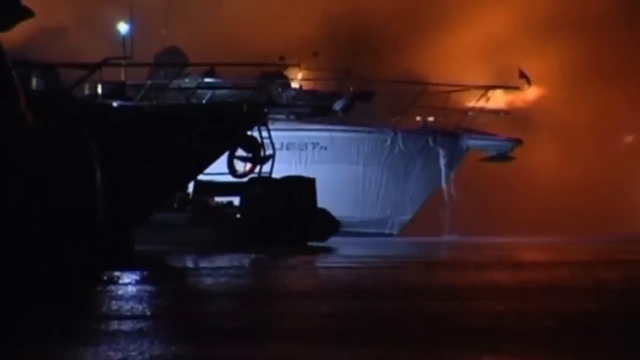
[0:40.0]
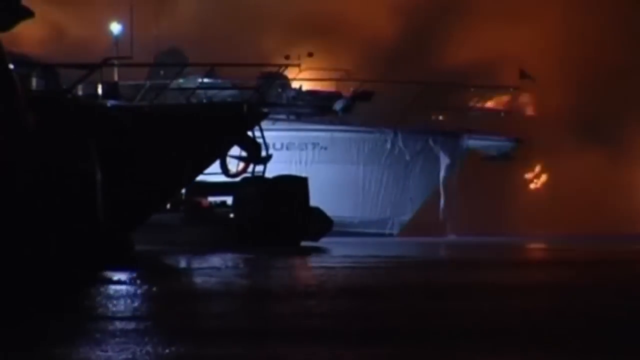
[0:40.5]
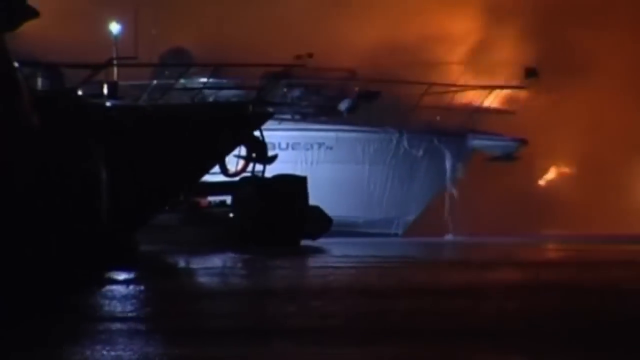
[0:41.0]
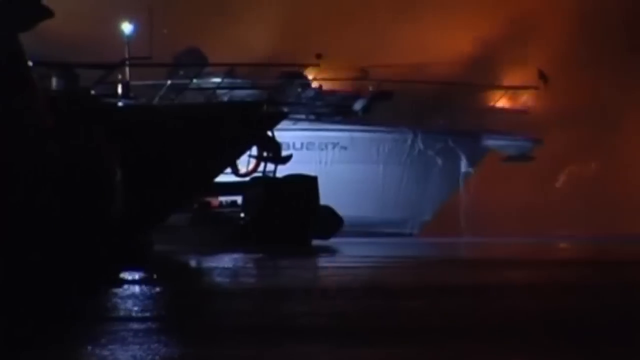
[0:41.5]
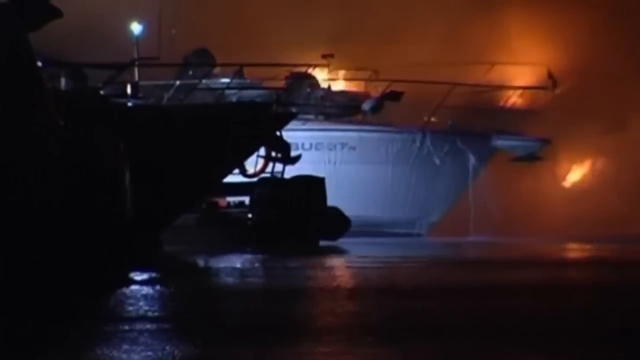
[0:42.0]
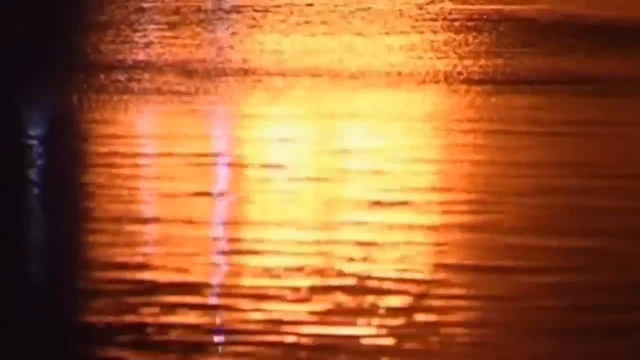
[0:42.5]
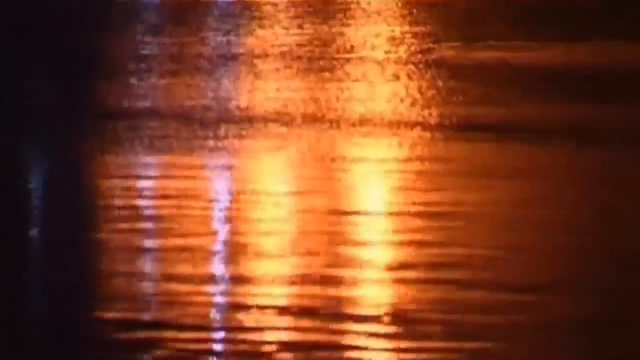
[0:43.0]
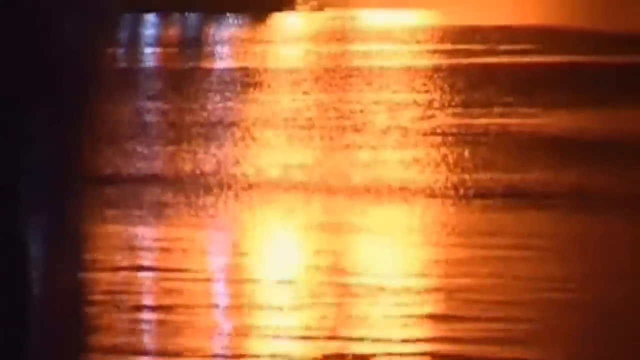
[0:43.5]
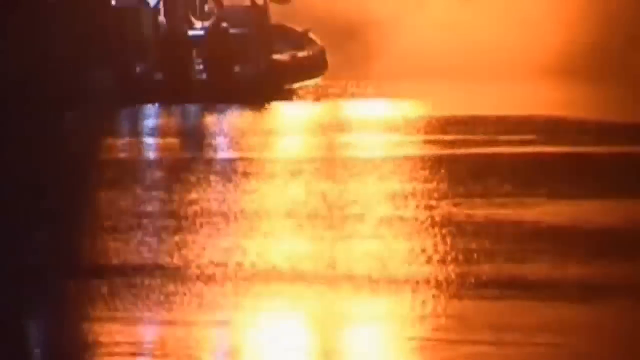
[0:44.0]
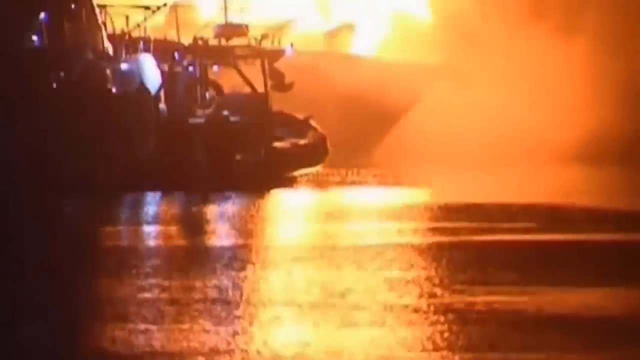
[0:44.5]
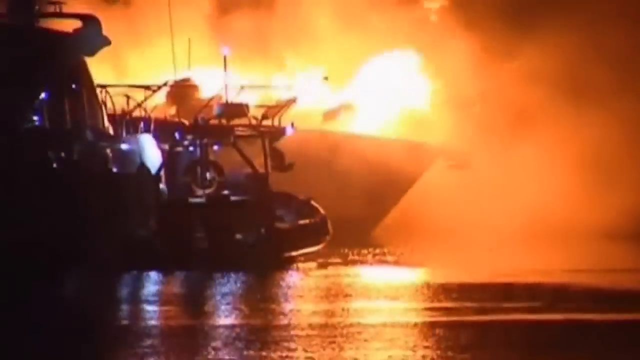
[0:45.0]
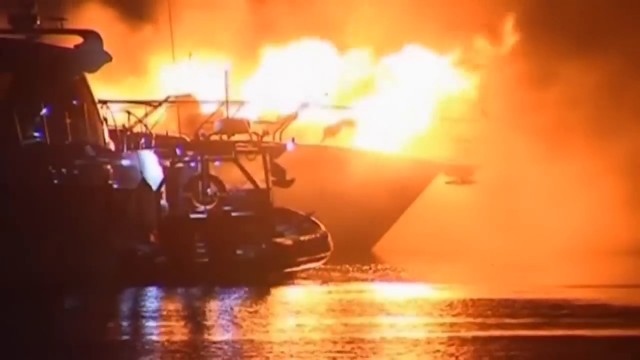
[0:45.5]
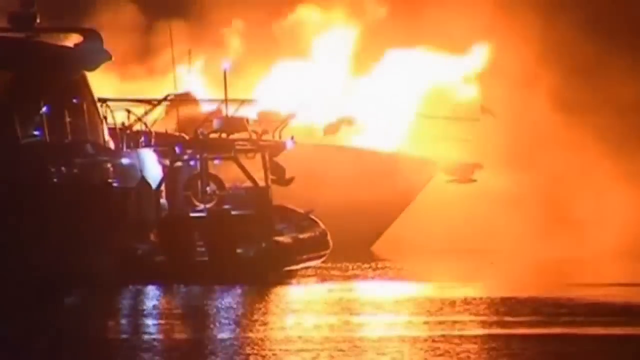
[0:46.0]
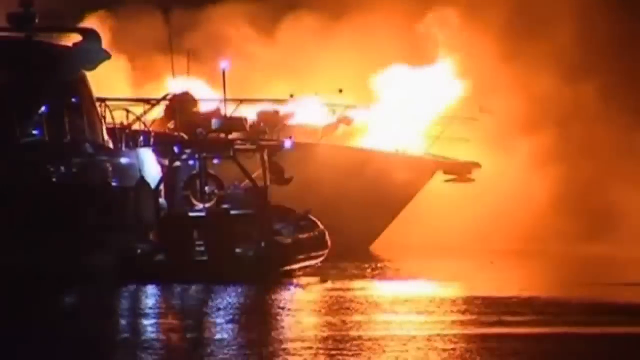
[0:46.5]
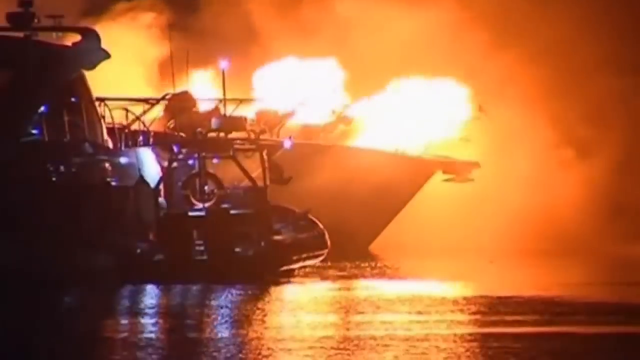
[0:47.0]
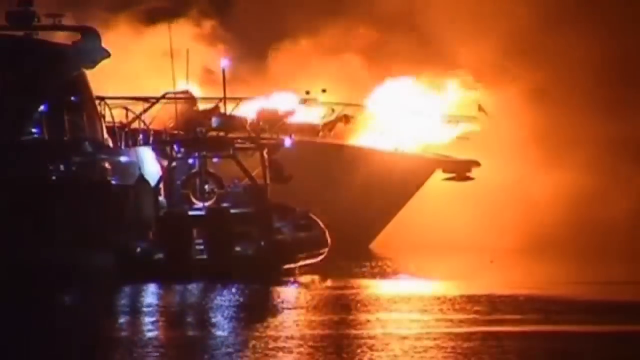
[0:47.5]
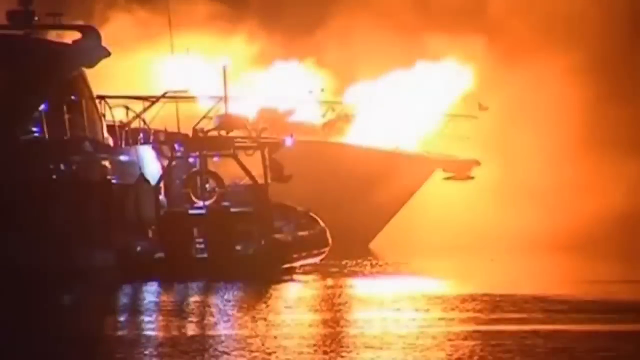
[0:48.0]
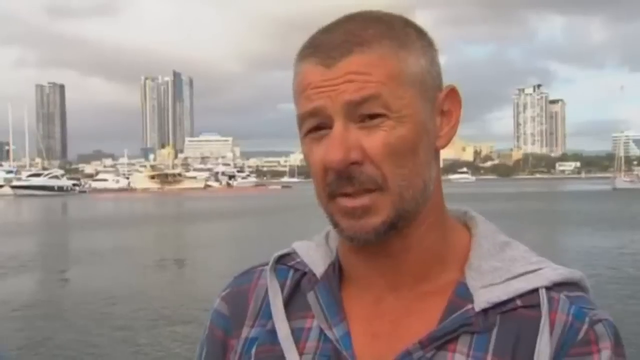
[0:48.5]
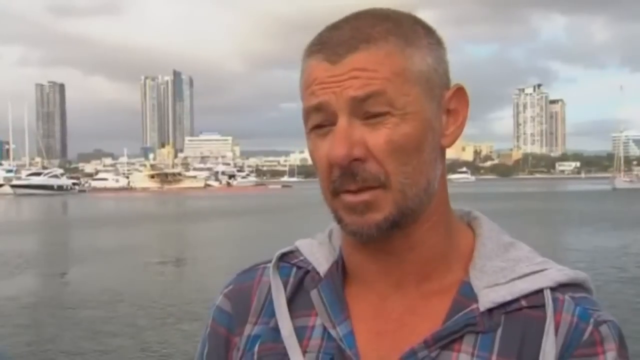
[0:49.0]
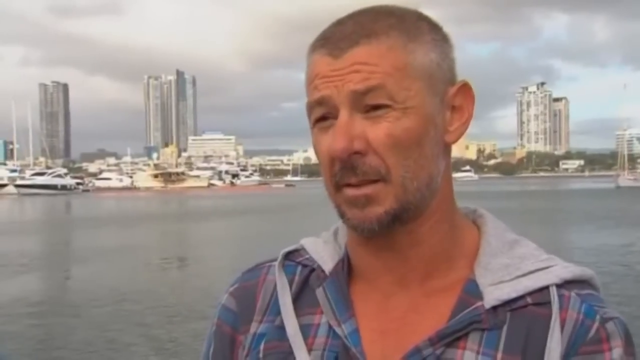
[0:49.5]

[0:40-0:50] A boat is on fire, with a body of water on the right side and a lot of orange clouds from the fire in the background; the flames are yellow and orange. The scene cuts to a body of water where the reflection of the fire is yellow and orange. The camera pans up to show the boat completely caught in flames from the top, the flames white, yellow and orange, with smoke moving from left to right. In the foreground there are two more boats in front of it, which look dark because the scene seems to be at night. The video then cuts to a man being interviewed. He wears a hoodie with a gray hood, and the rest of the sweater seems to be blue-gray. He has a gray beard and short gray hair. Behind him are a body of water, some skyscrapers, and a sky covered in gray clouds.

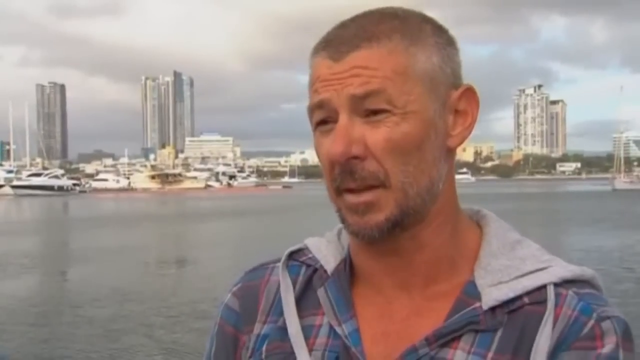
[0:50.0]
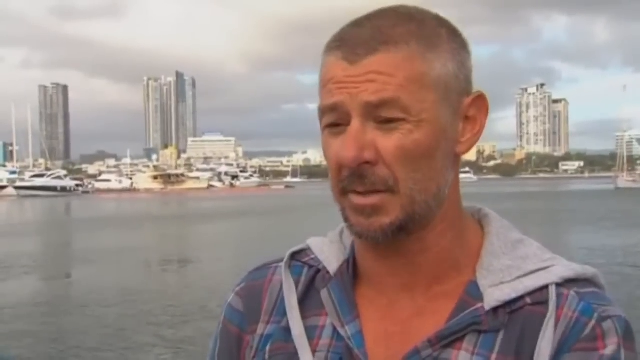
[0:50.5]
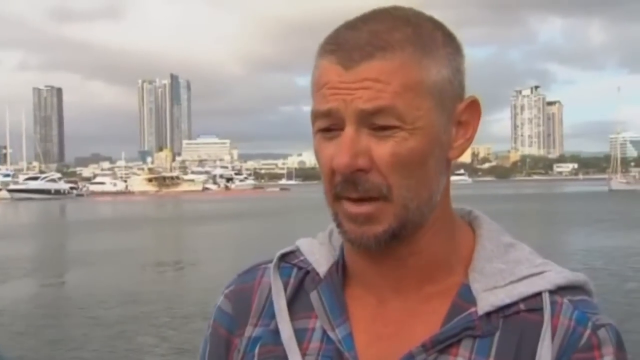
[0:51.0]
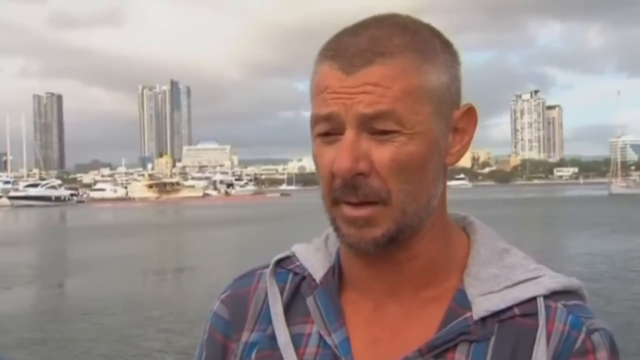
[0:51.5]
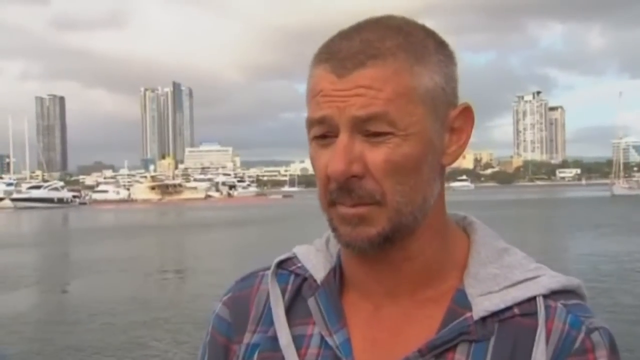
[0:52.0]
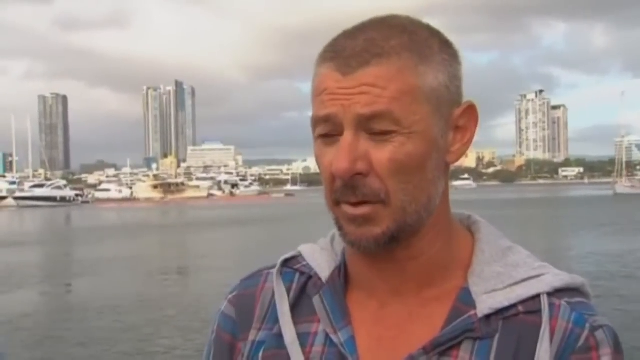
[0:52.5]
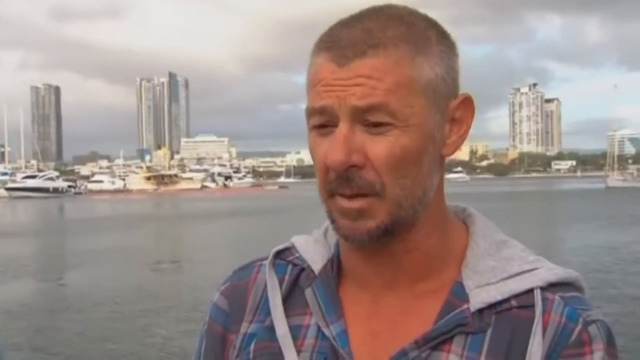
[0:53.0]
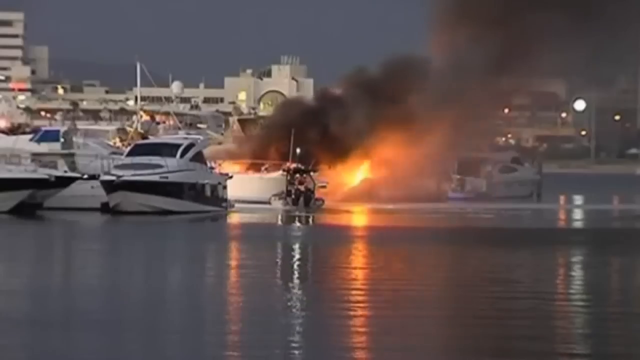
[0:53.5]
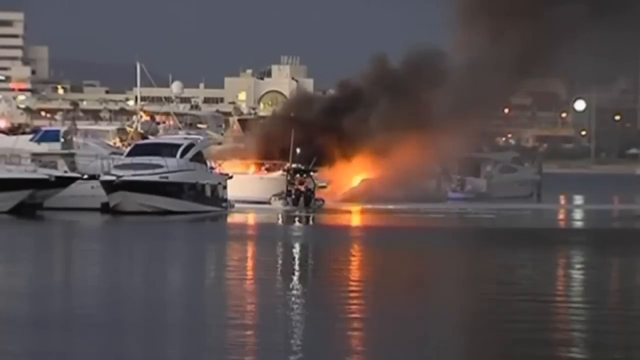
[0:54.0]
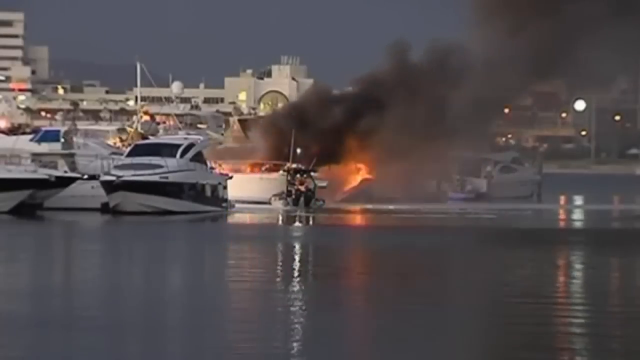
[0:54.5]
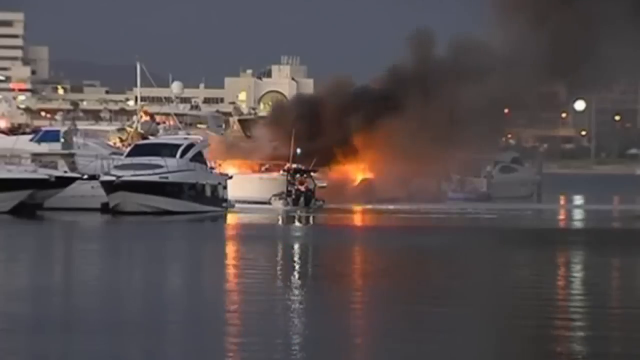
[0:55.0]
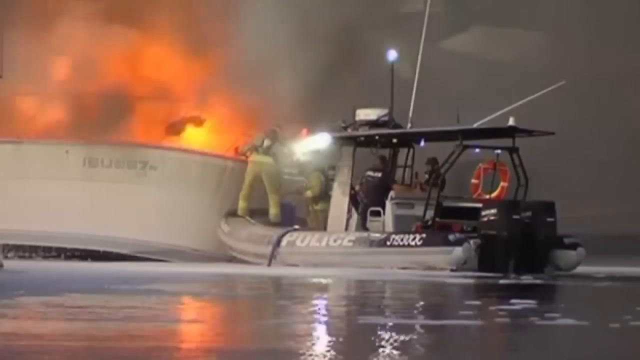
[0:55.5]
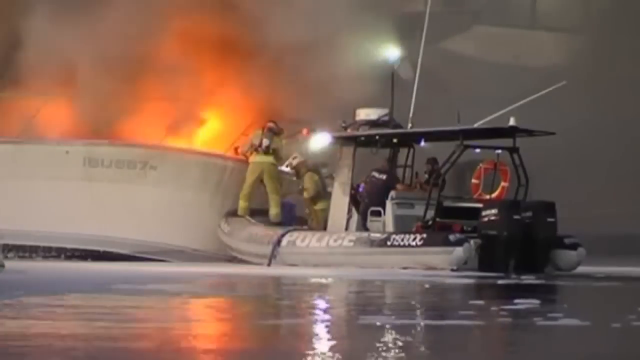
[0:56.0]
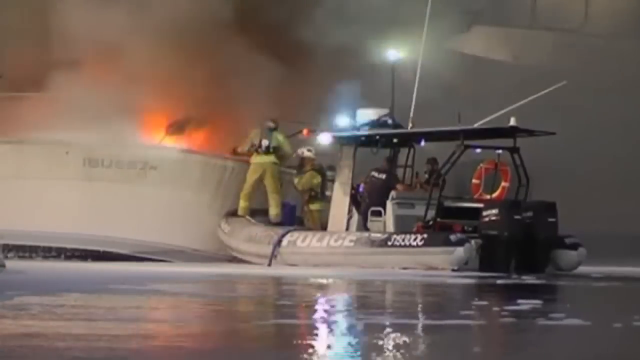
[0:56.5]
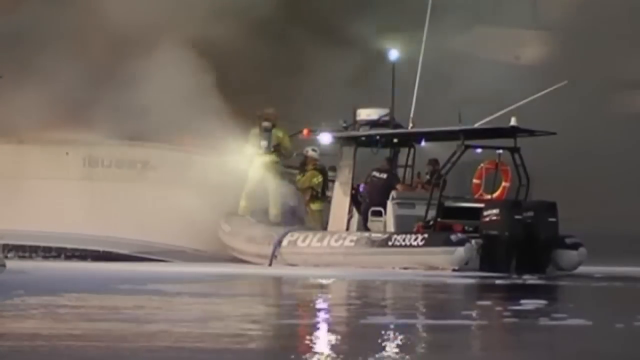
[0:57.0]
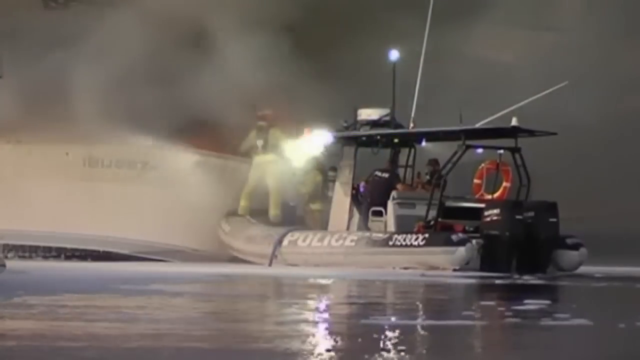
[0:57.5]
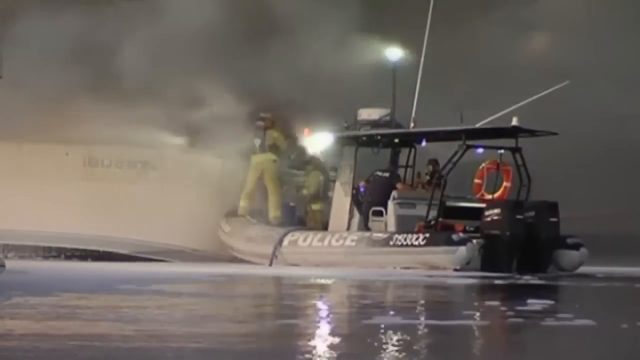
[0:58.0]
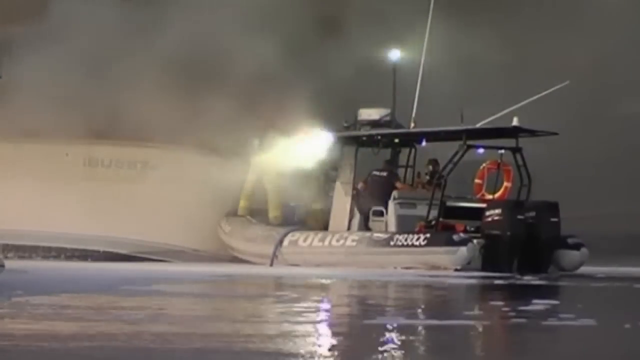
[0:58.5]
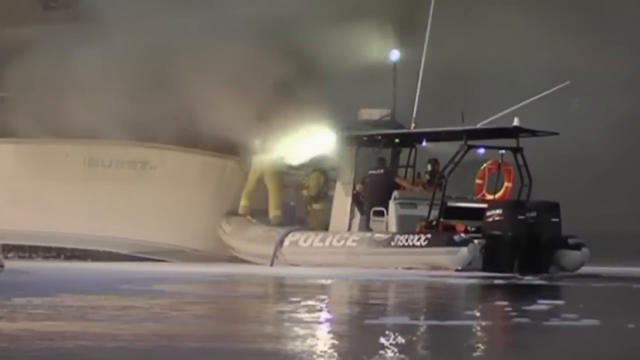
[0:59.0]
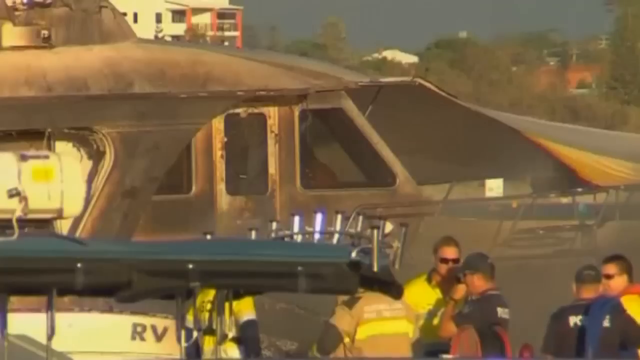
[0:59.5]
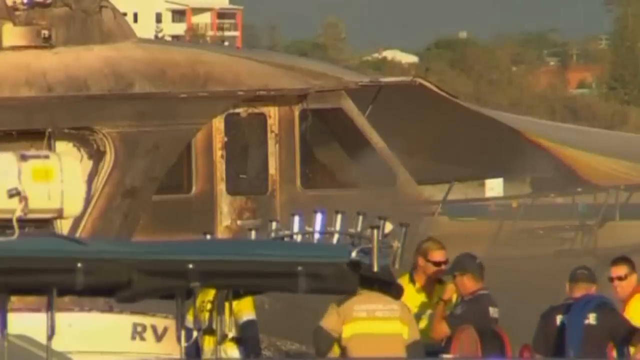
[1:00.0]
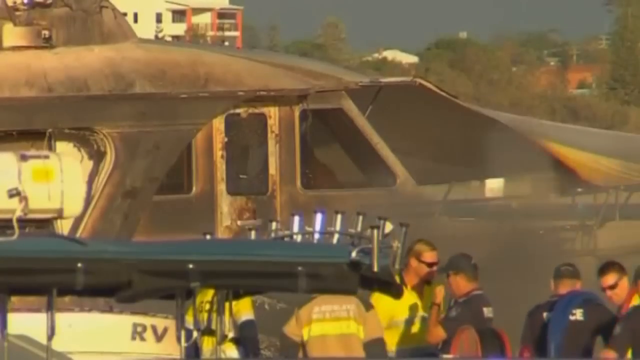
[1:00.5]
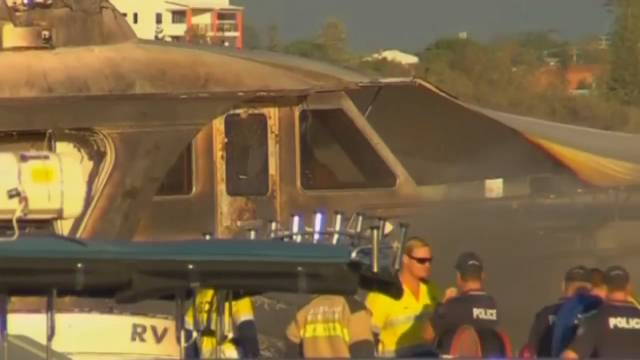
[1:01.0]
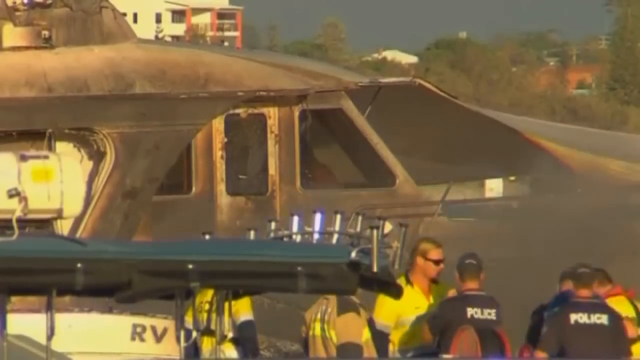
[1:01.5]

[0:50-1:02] A man with a gray beard and short gray hair is being interviewed. Behind him is a body of water that looks gray, and beyond that are some boats that seem to be stationed in the harbor, about three skyscrapers, and a gray sky covered in clouds. Another scene then shows a boat on fire; the whole boat looks like it is caught in orange and yellow flames, and dark black and gray clouds or smoke come out of it, moving from left to right. On the left side are some other white boats that seem to be docked, and white buildings are in the background. The video cuts to another boat next to the burning boat, with "police" written on its side. Two firefighters in yellow firefighter outfits appear to be trying to contain the fire. As the shot continues, the flames disappear and a large amount of white smoke starts to come out.